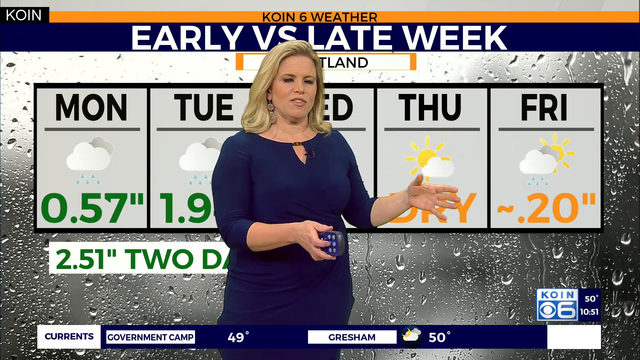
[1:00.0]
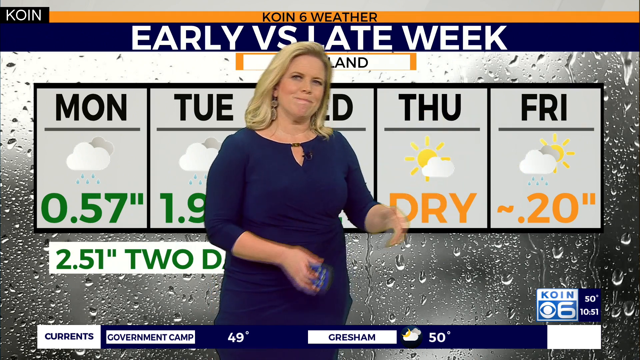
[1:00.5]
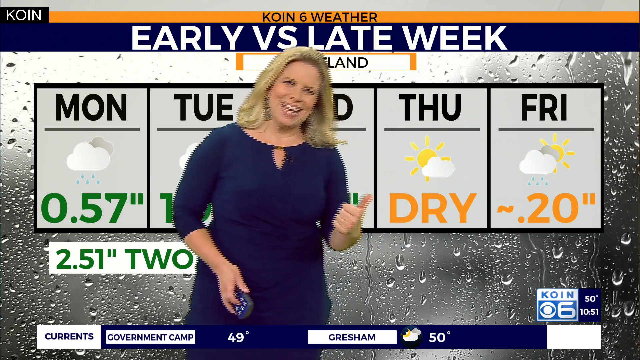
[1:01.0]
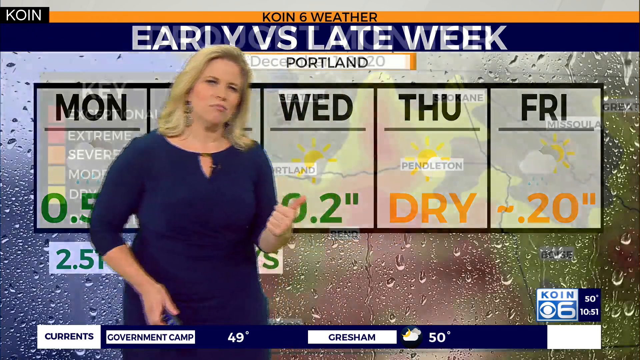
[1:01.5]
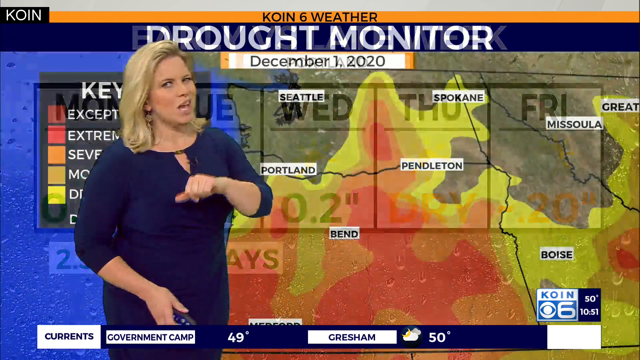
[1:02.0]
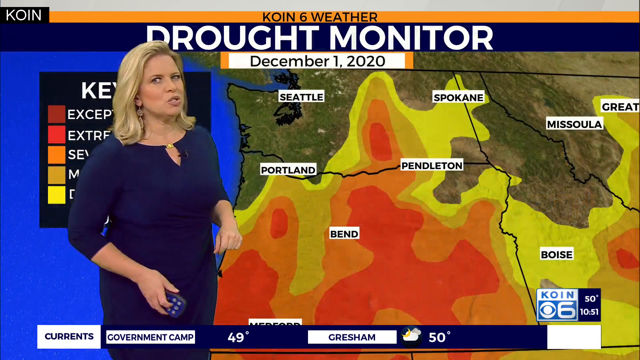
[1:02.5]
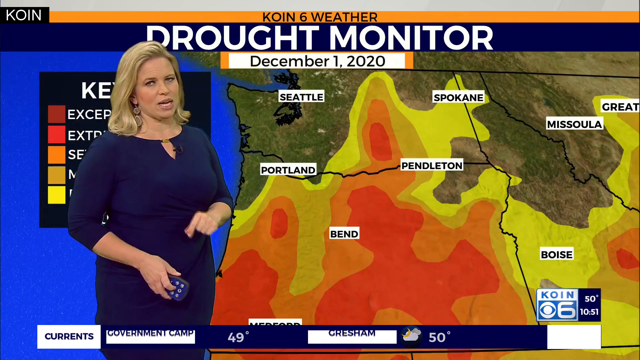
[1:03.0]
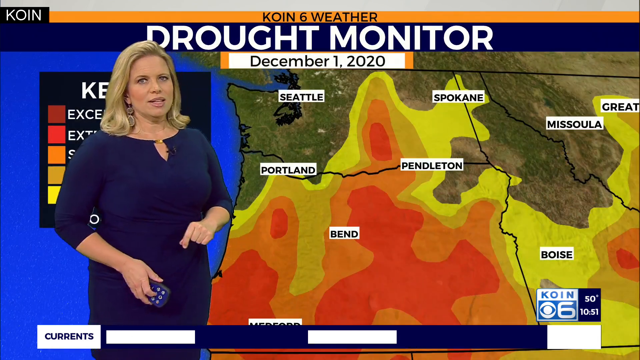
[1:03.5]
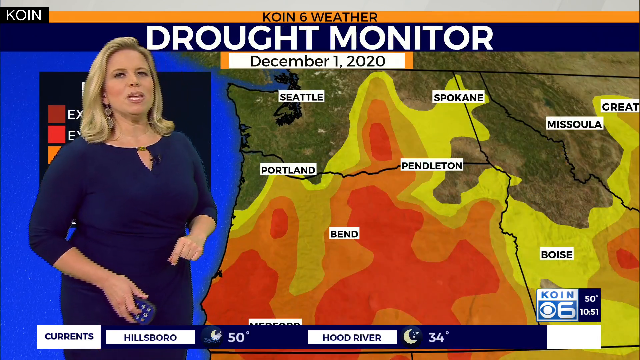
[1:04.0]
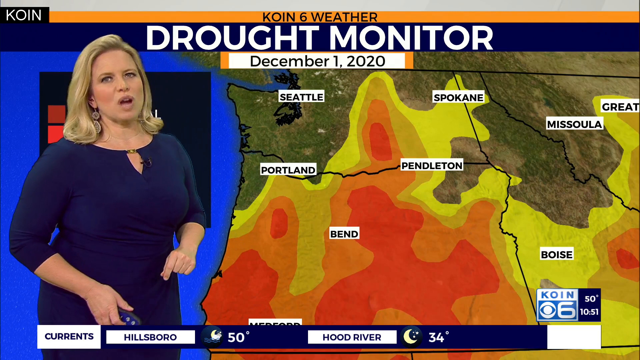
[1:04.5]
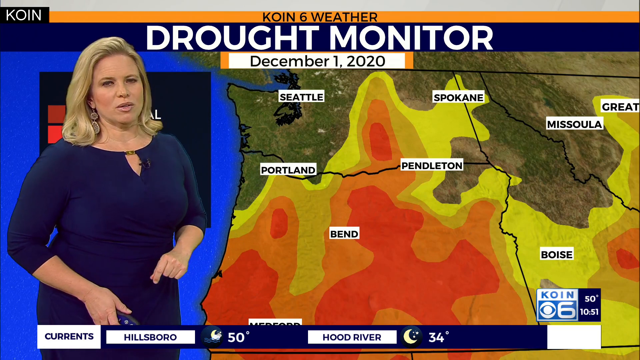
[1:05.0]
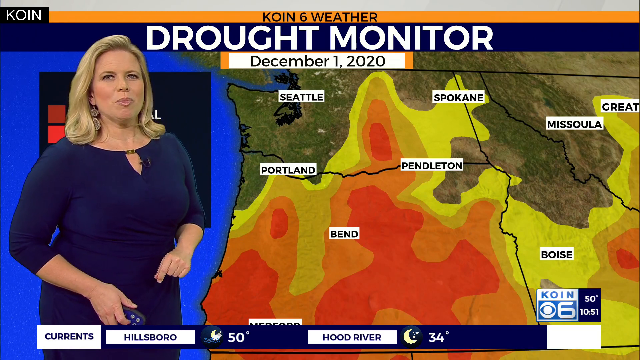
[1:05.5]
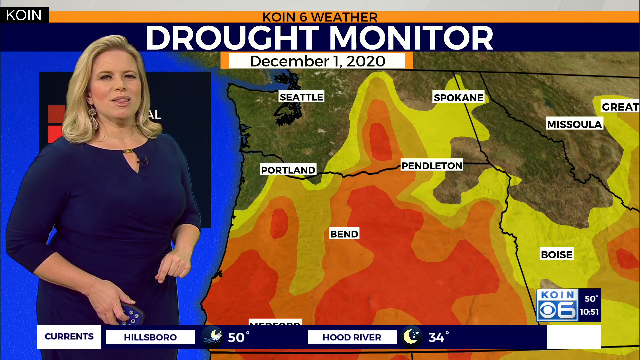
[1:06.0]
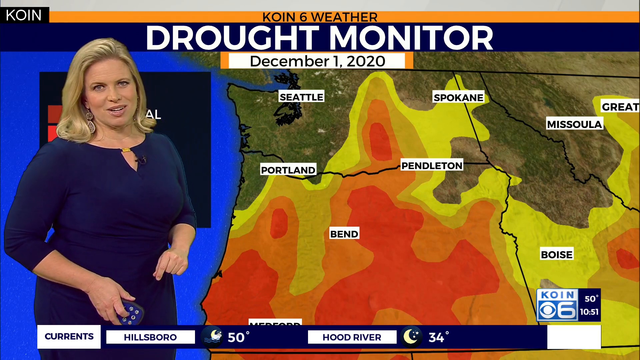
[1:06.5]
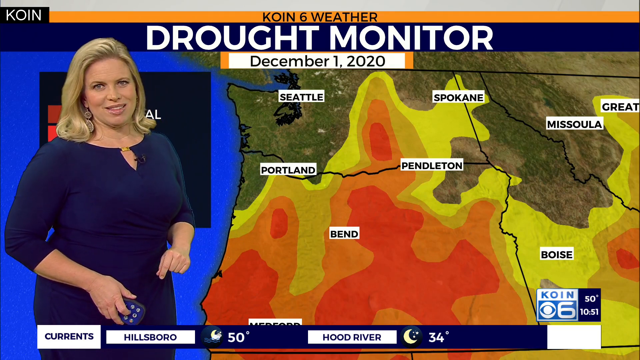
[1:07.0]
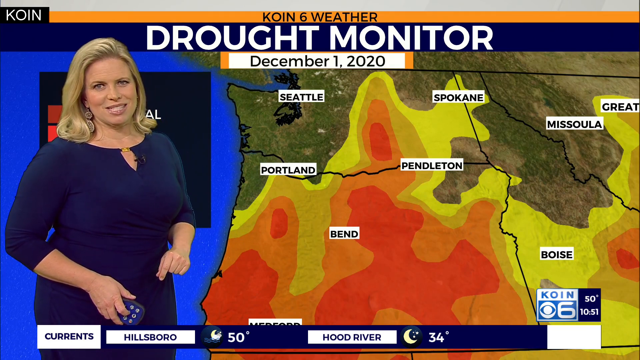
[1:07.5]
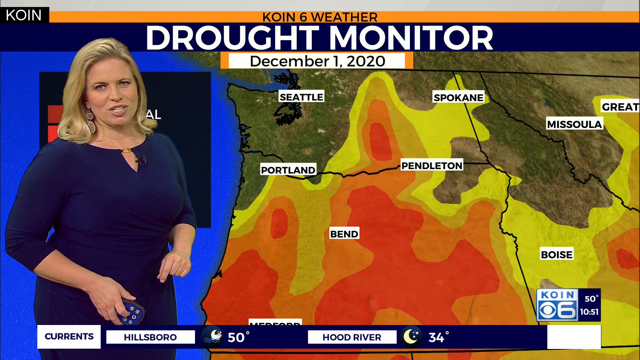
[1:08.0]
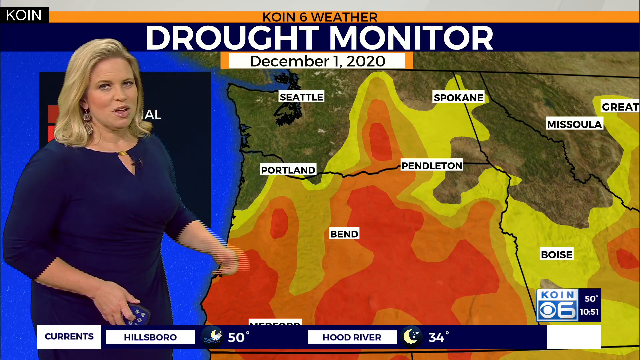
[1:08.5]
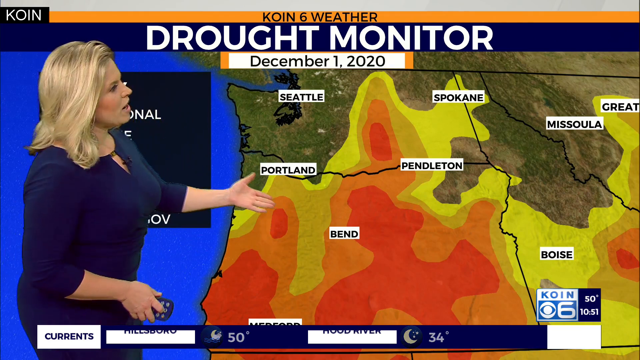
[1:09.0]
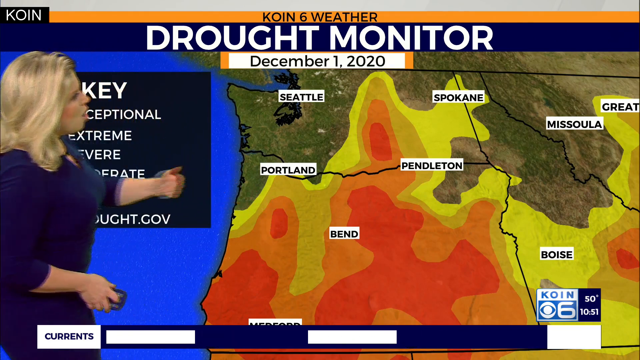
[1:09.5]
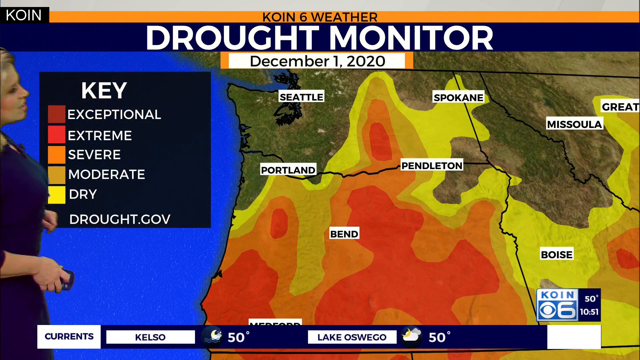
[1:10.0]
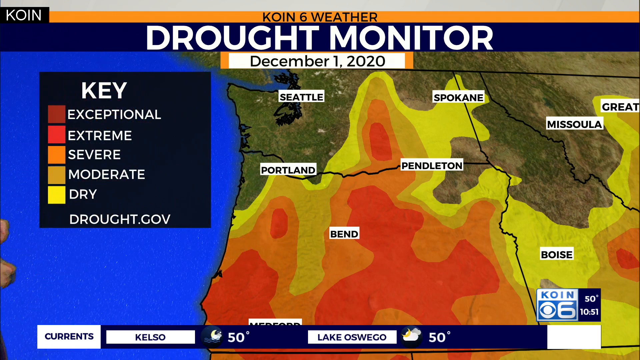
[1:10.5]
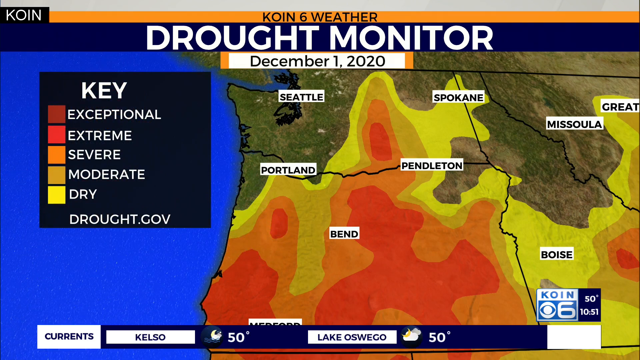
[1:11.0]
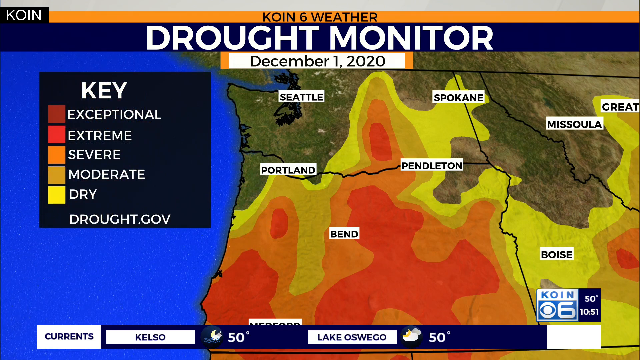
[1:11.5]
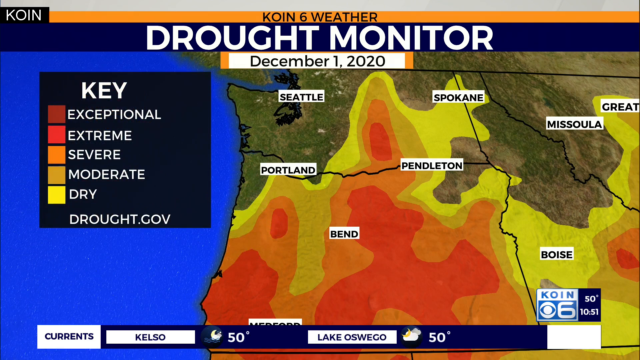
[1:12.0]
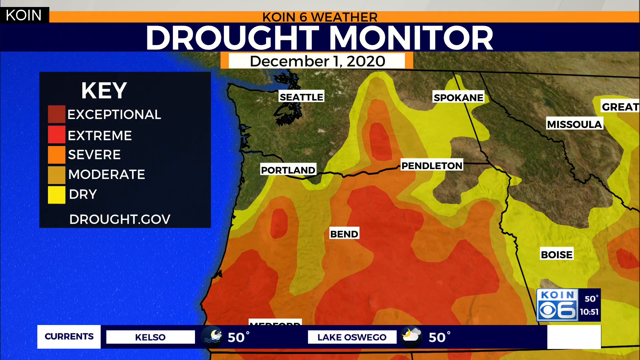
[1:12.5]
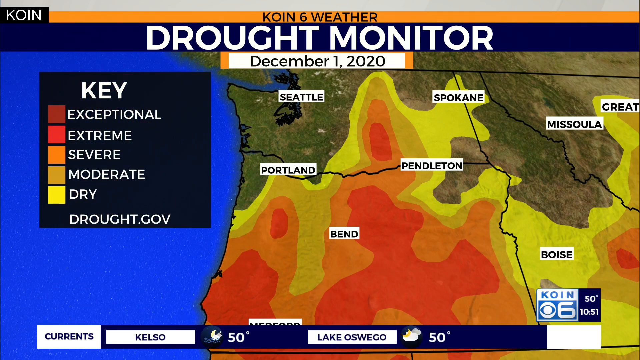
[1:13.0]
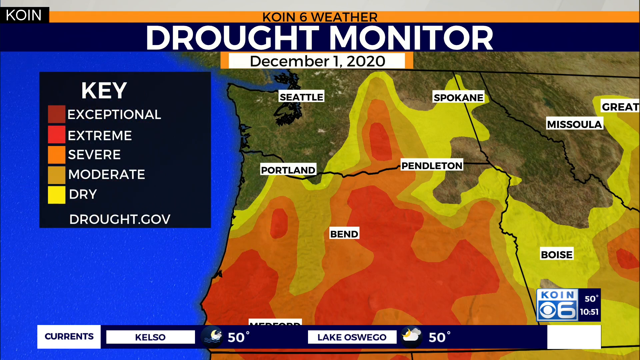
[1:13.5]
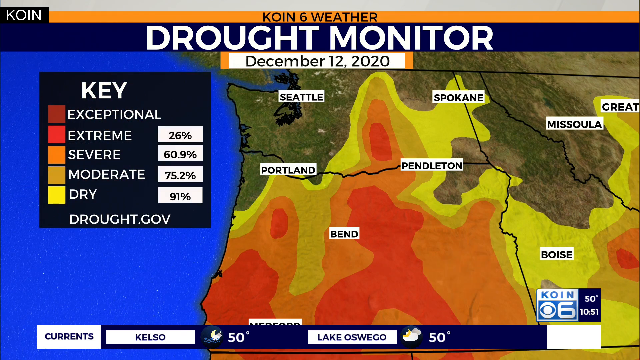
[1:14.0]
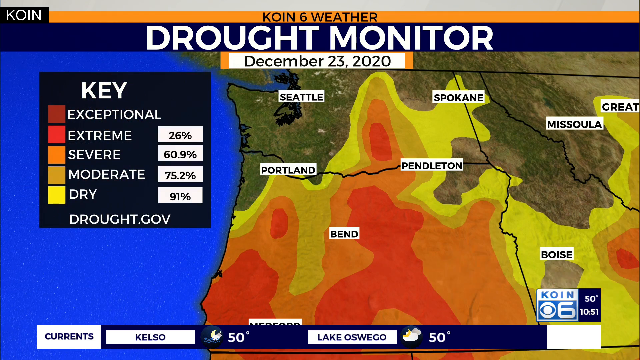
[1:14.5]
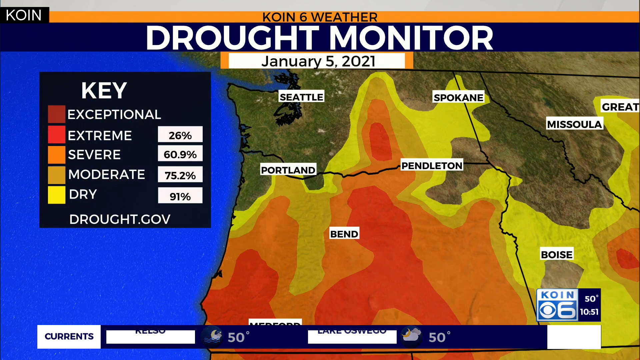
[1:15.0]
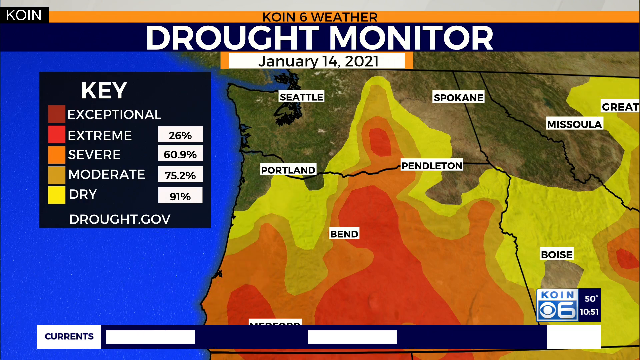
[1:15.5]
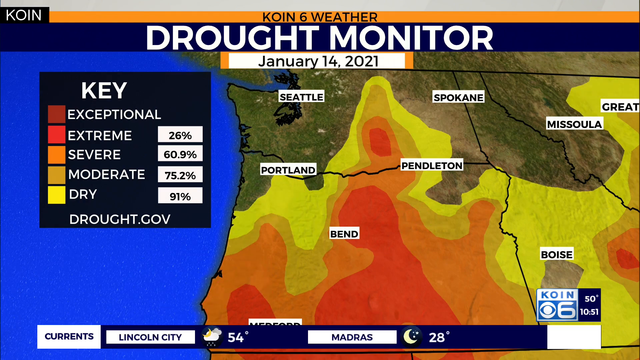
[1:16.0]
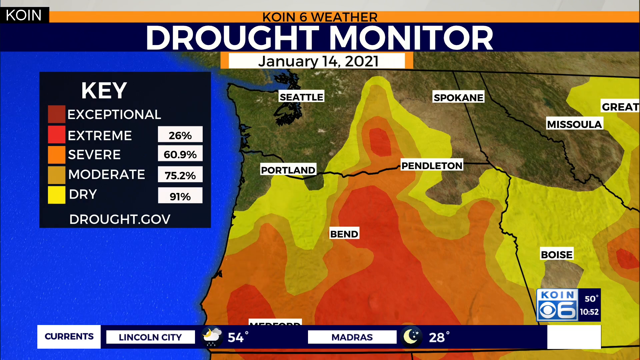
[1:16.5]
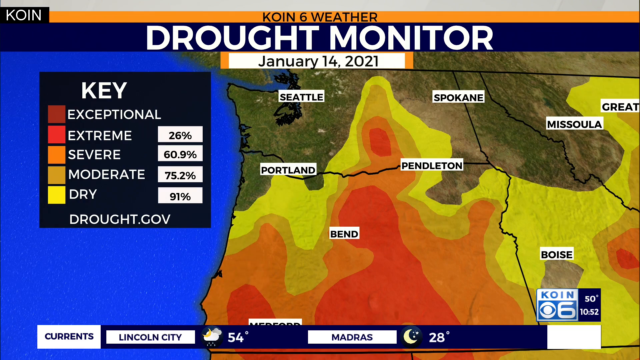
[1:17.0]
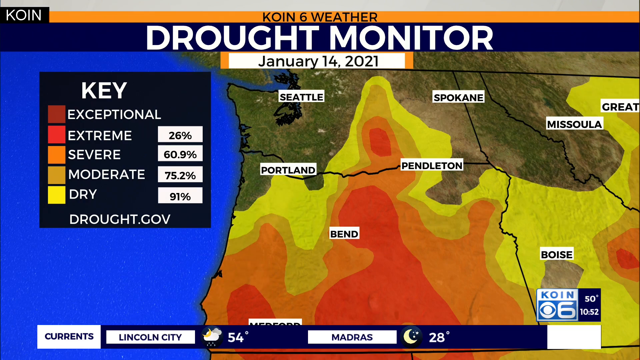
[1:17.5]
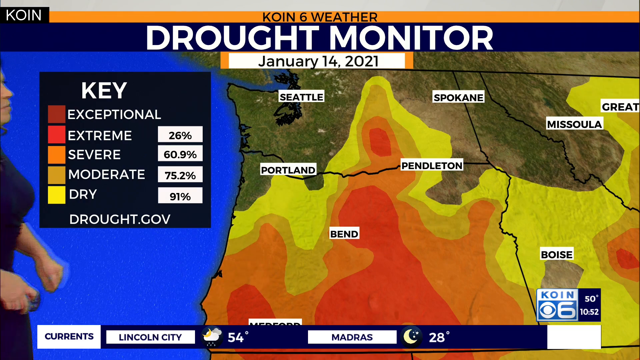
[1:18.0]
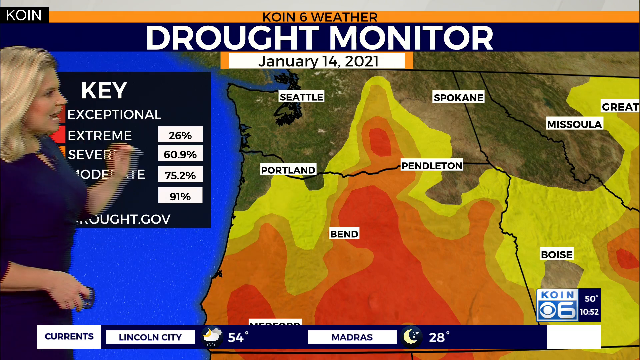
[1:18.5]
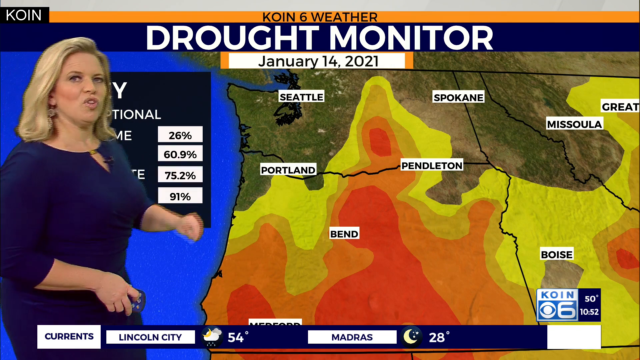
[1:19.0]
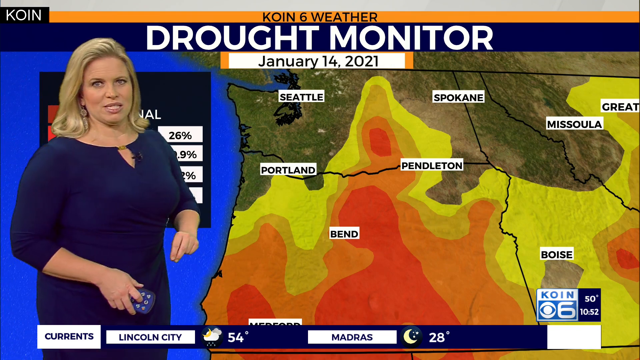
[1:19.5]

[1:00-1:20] She alternates between pointing at the screen and taking breaks from pointing as she talks. The screen reads "drought monitor December 1st, 2020" and shows a map of different areas around Portland with a color key: dark red is exceptional, bright red is extreme, orange is severe, brown is moderate and yellow is dry. The information is credited to drought.gov.